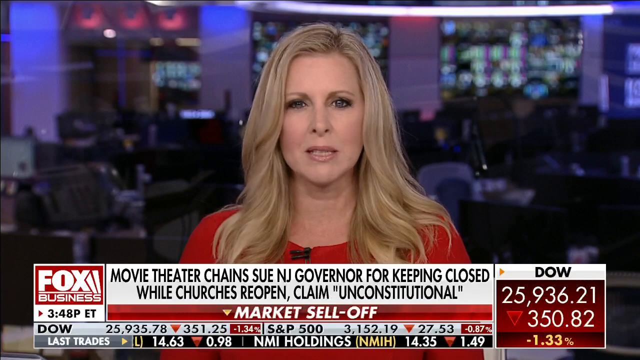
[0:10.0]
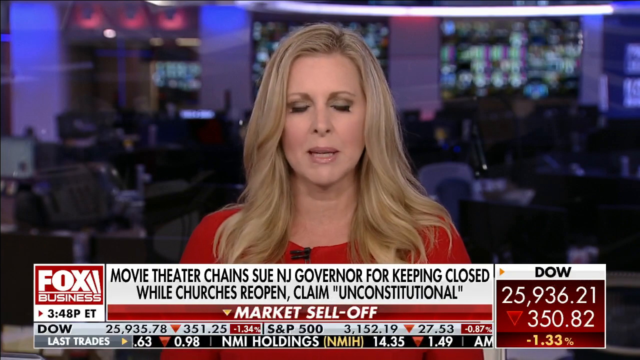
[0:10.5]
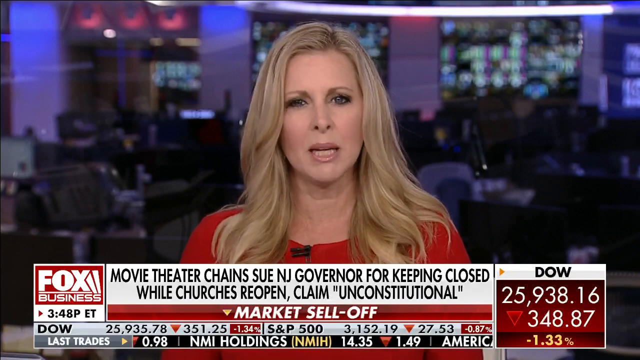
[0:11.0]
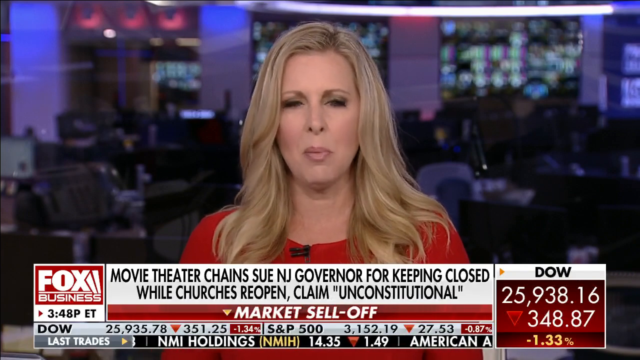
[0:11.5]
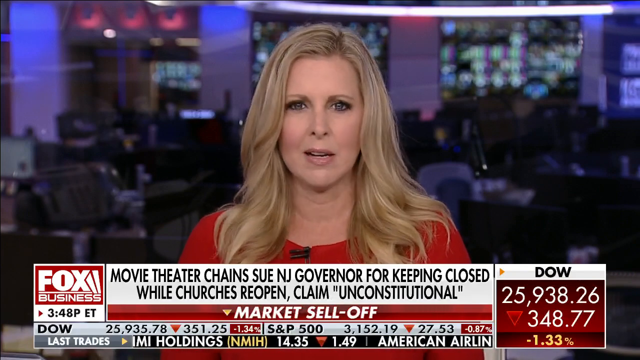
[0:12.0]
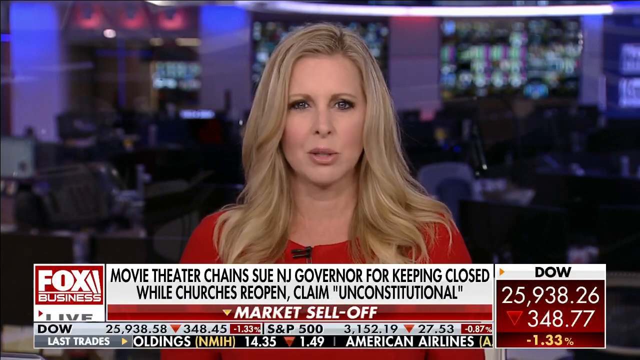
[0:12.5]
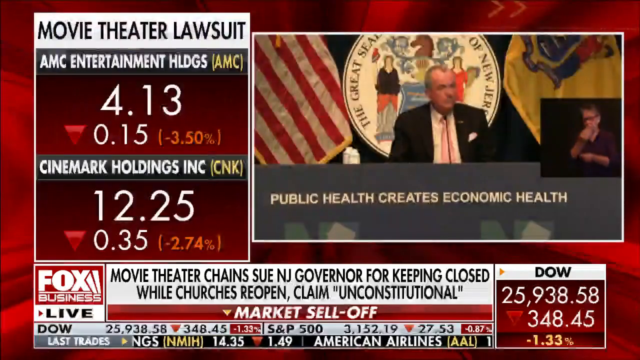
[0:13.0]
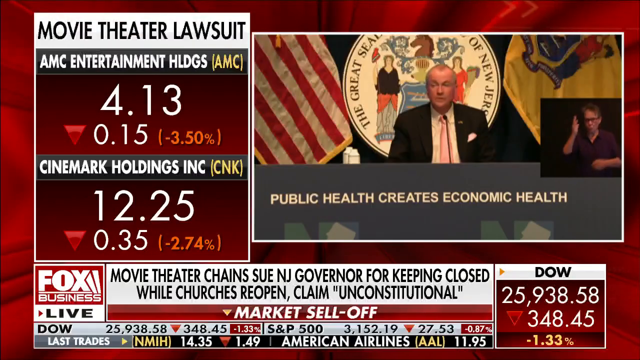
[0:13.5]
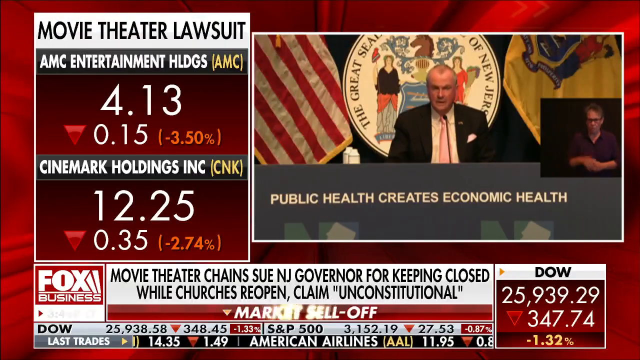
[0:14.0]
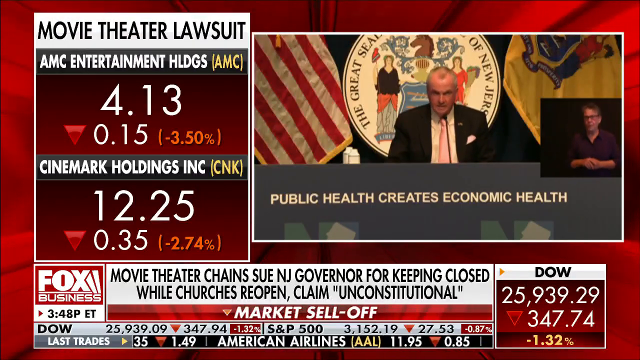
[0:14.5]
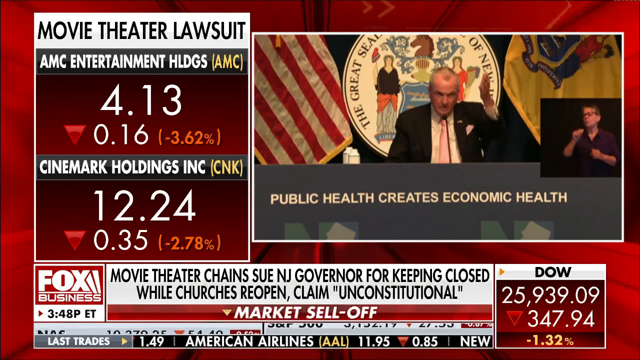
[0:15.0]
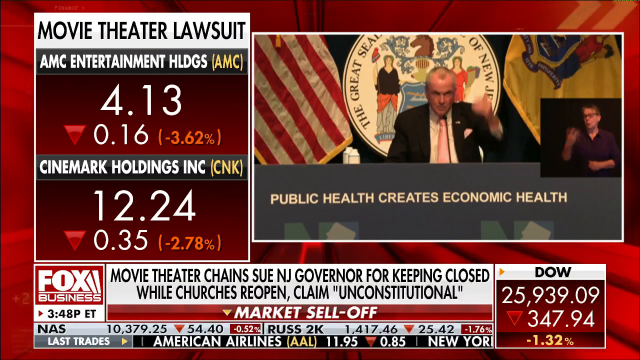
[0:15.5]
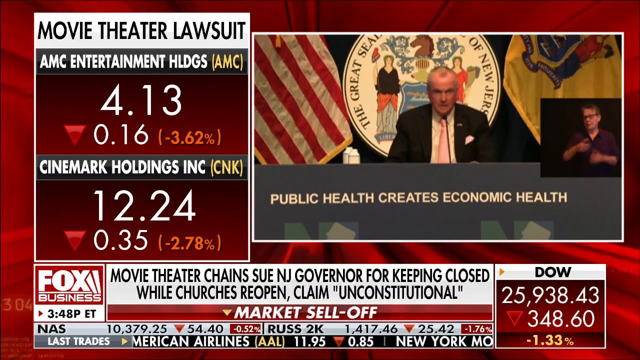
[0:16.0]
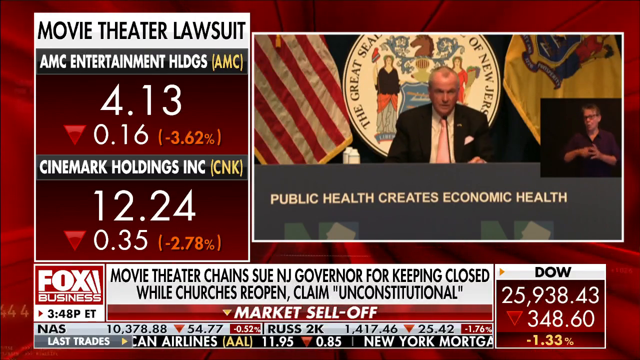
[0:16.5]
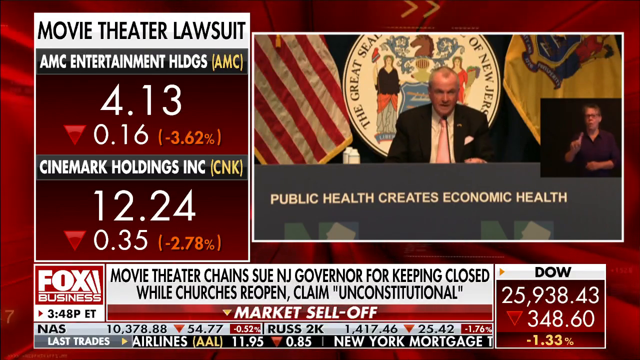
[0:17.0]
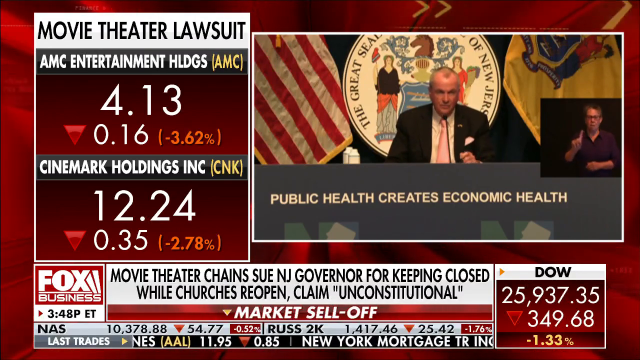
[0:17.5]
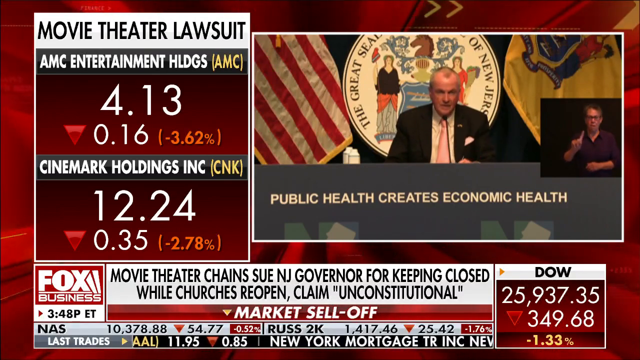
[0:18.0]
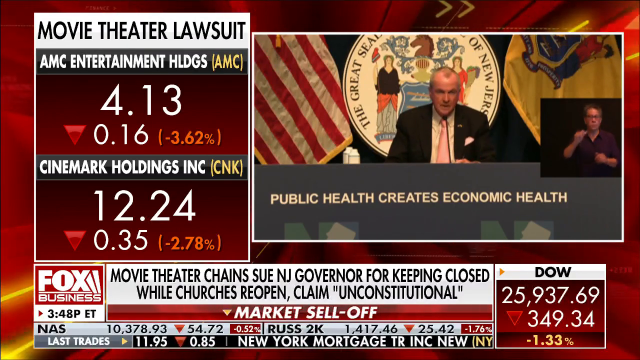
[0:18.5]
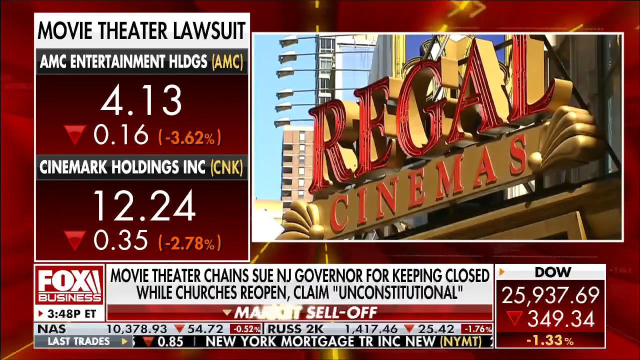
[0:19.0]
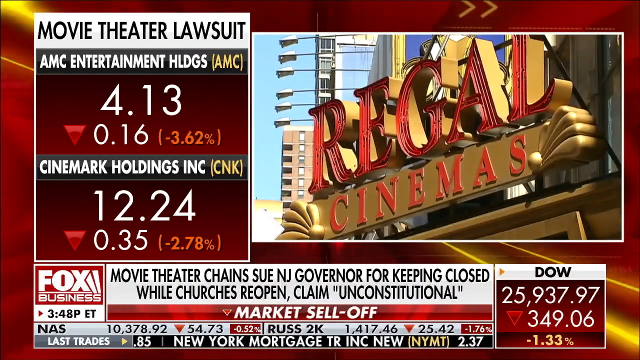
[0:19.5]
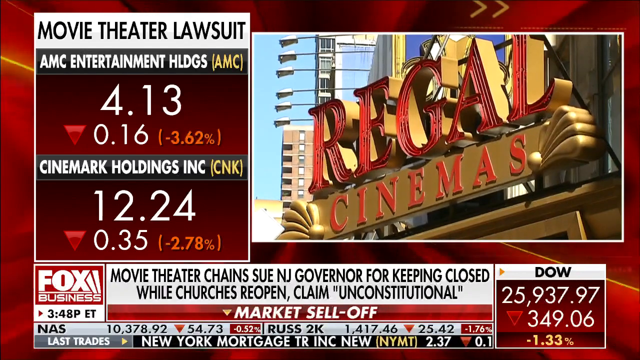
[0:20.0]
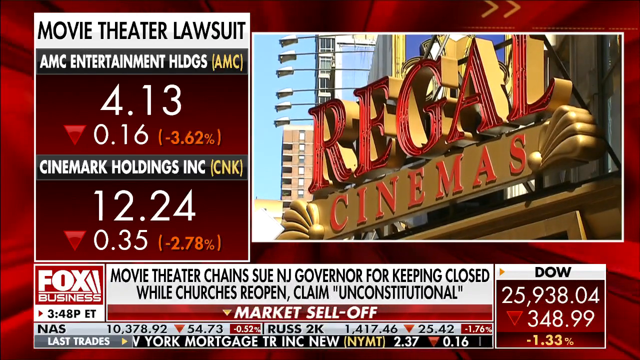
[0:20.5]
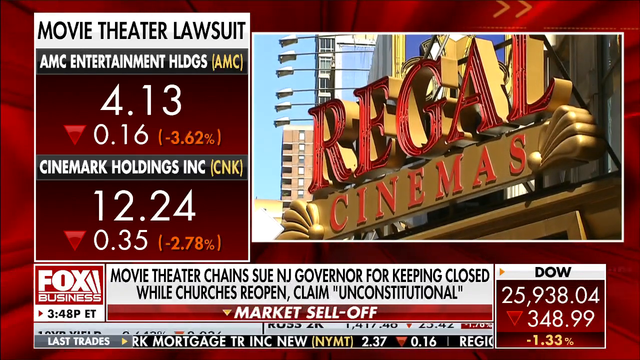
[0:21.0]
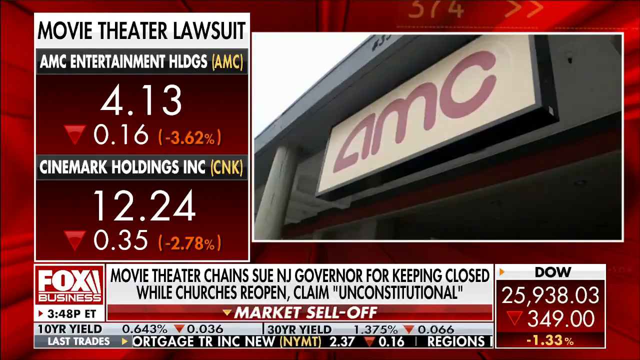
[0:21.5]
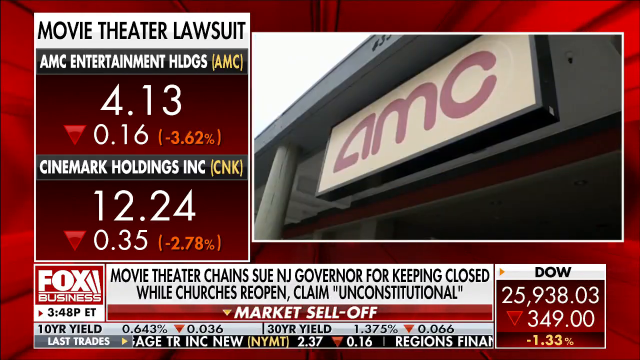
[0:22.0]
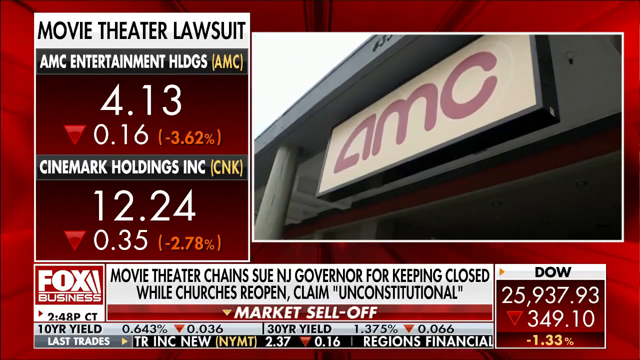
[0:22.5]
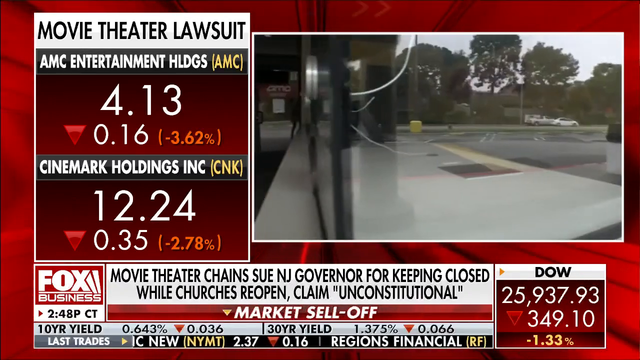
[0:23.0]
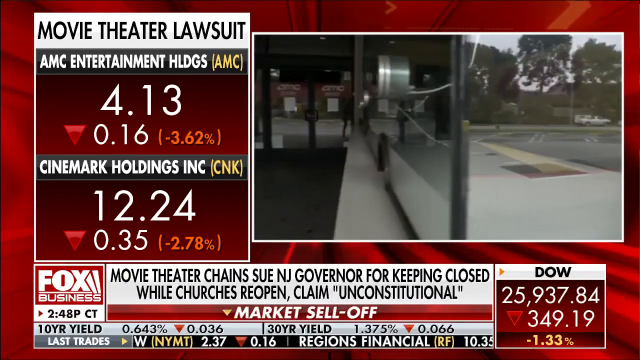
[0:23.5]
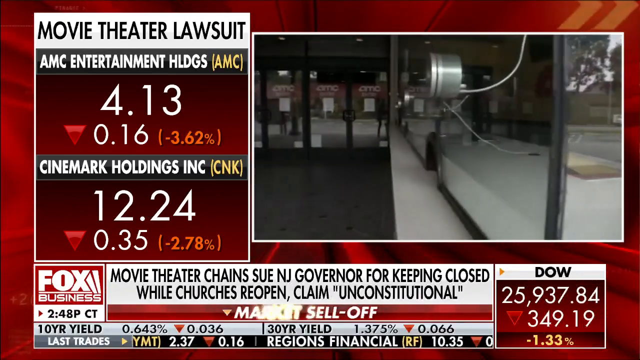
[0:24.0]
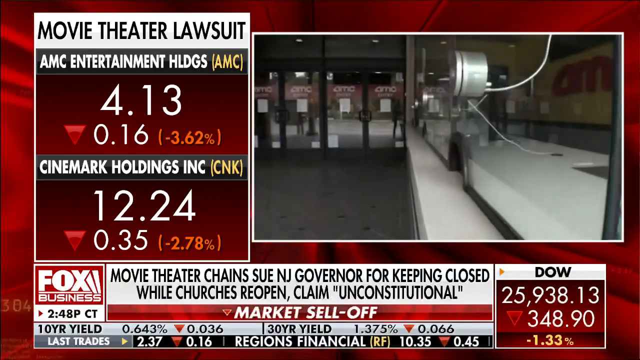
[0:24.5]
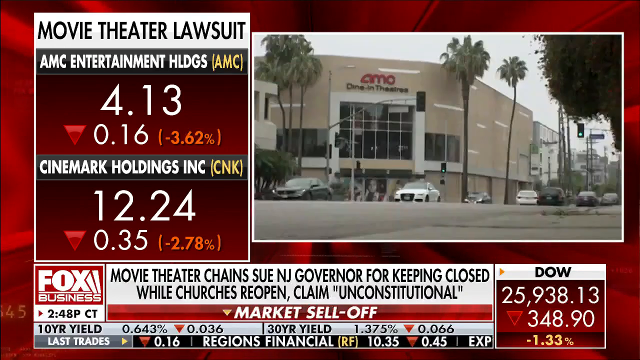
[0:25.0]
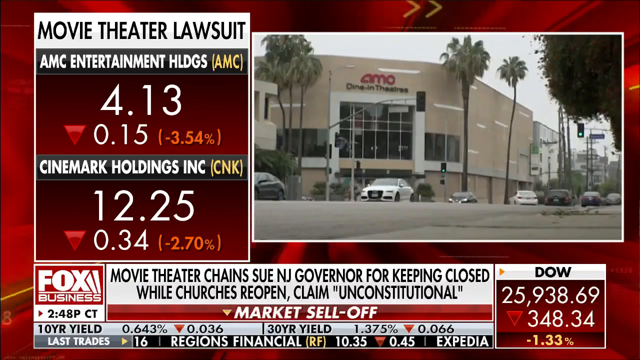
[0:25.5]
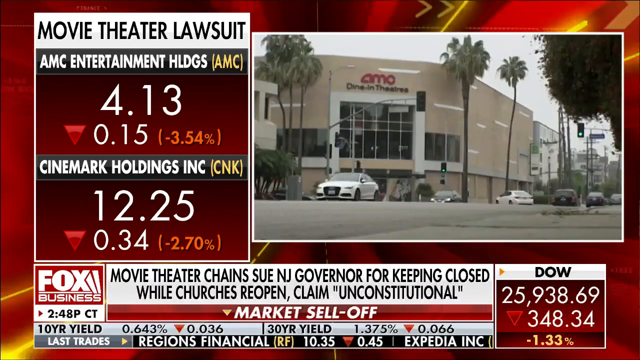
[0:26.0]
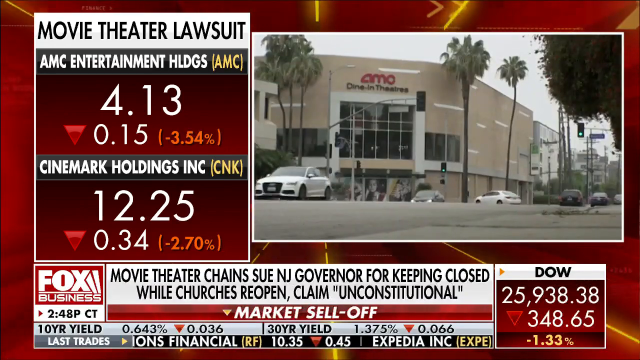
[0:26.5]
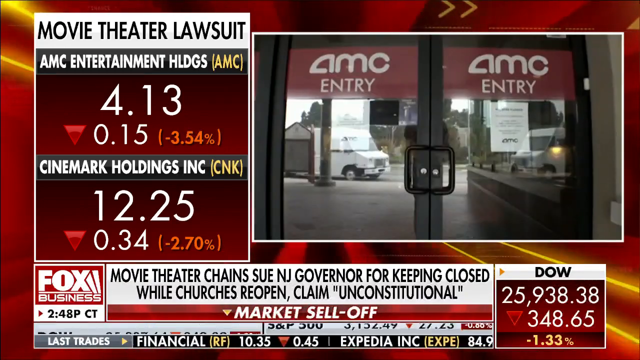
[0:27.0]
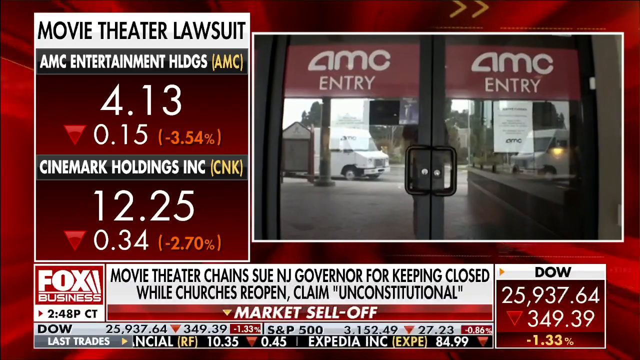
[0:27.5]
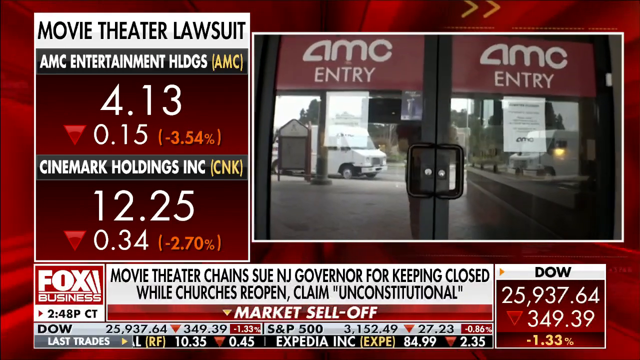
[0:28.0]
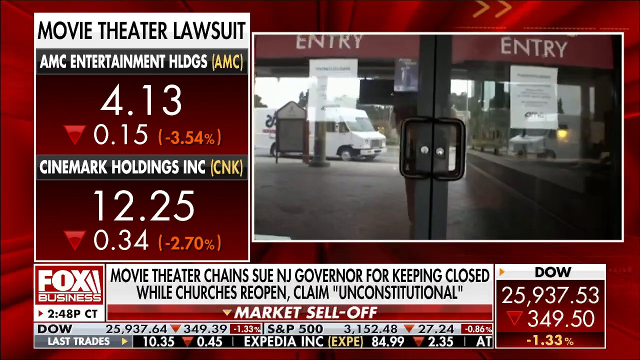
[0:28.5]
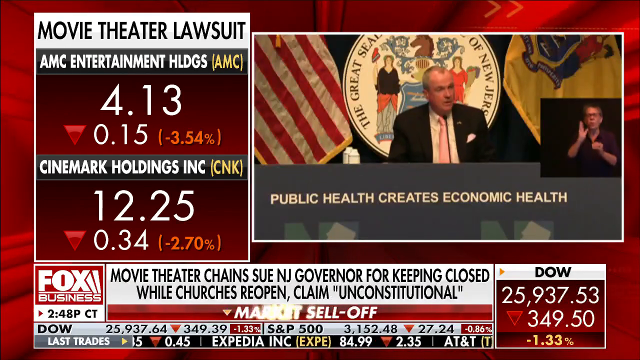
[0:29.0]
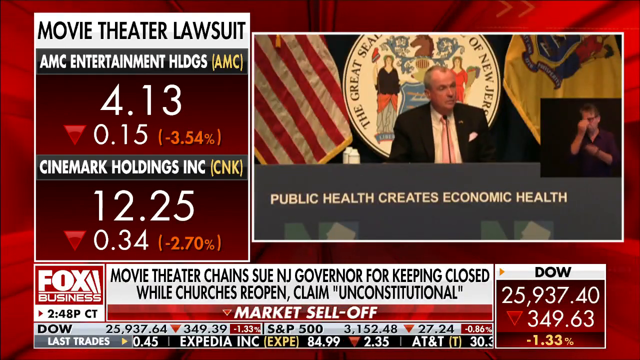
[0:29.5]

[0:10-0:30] The blonde-haired news anchor in a red dress is on screen. The background behind her is blurry but looks like offices. At the very bottom is "Fox Business" and the heading "Movie theater chains sue NJ Governor for keeping closed while churches reopen, claim unconstitutional". Something unidentified is in the very left corner. A graphic reads "Movie theater lawsuit", listing "AMC Entertainment", "HLGDGS" at 4.1, down 0.15, and "Cinemark Holdings Inc." at 12.25, down 0.35. A small video clip appears in the corner with the text "Public health creates economic health", showing a man talking at a conference of some sort while another man translates what he says into sign language. Regal Cinemas and AMC Cinemas are then shown, with clips of several different cinema locations, before the man at the press conference appears again.